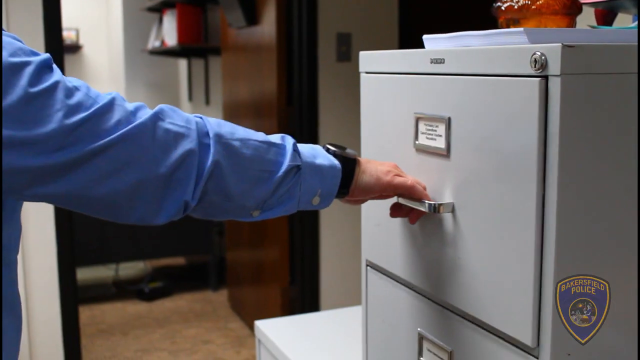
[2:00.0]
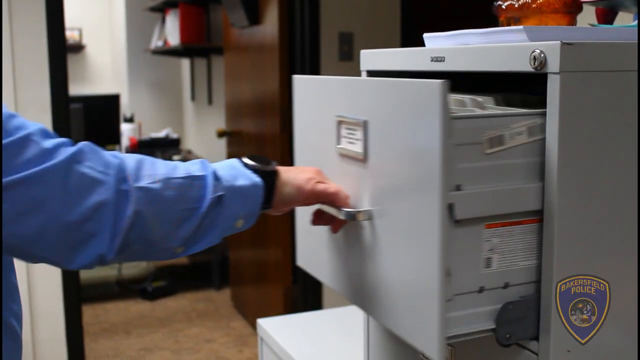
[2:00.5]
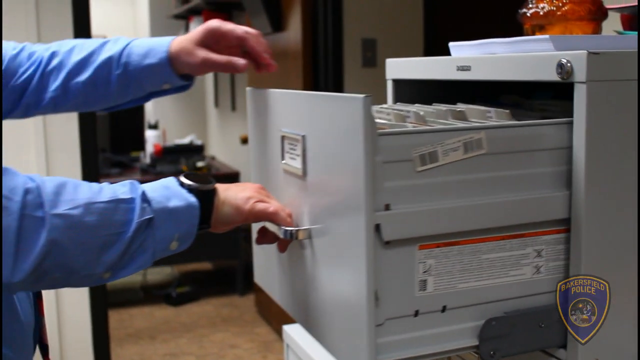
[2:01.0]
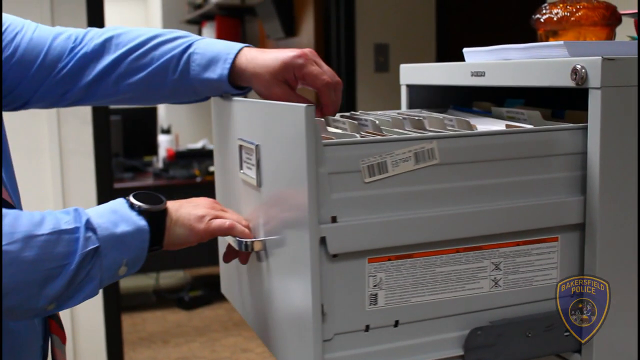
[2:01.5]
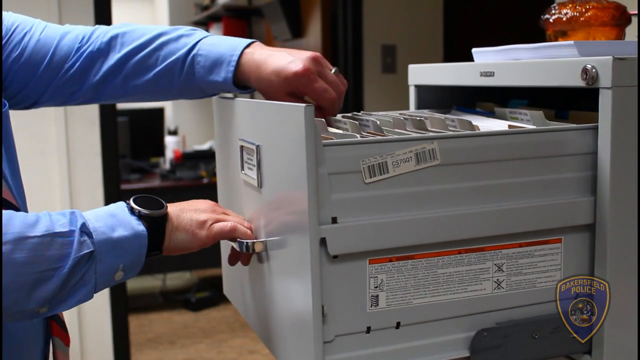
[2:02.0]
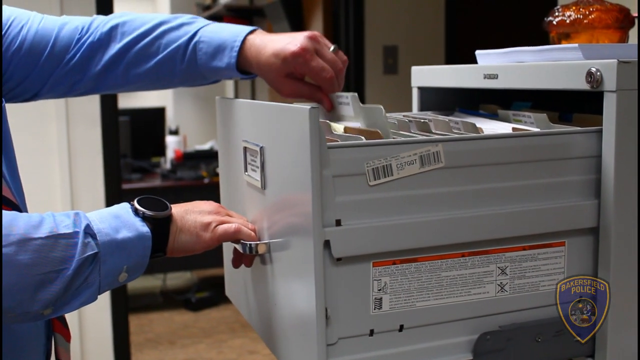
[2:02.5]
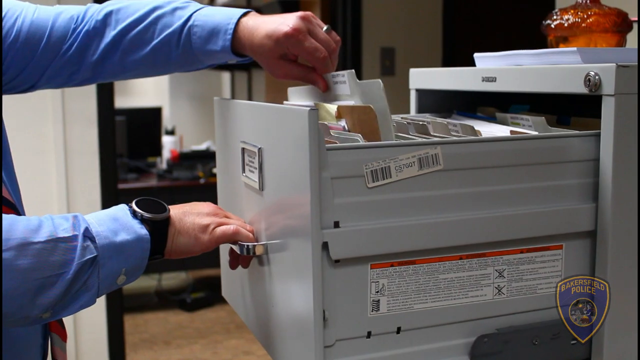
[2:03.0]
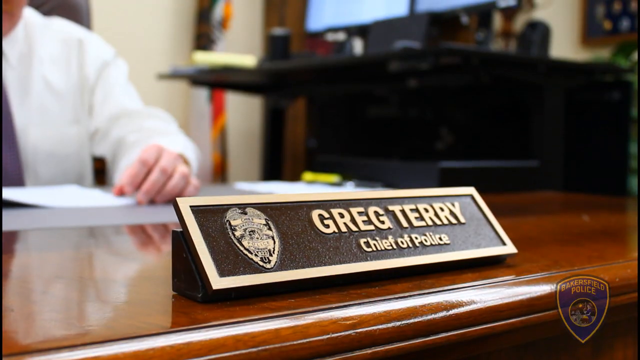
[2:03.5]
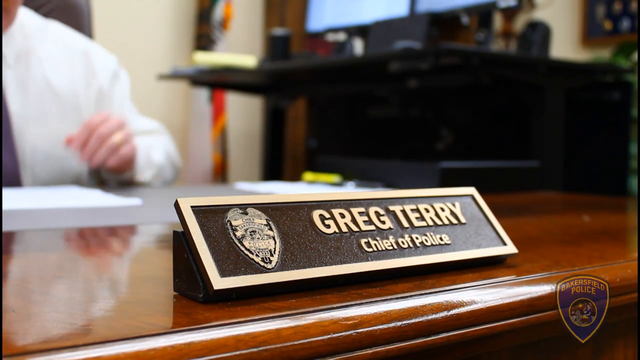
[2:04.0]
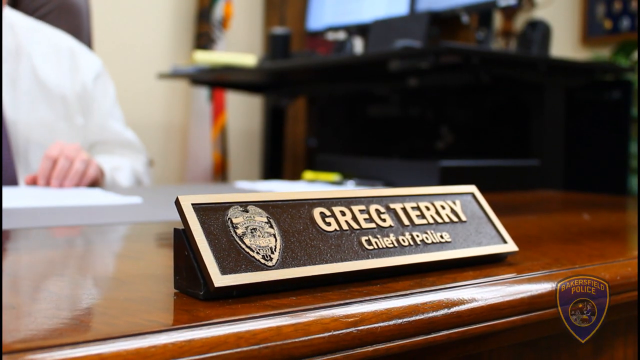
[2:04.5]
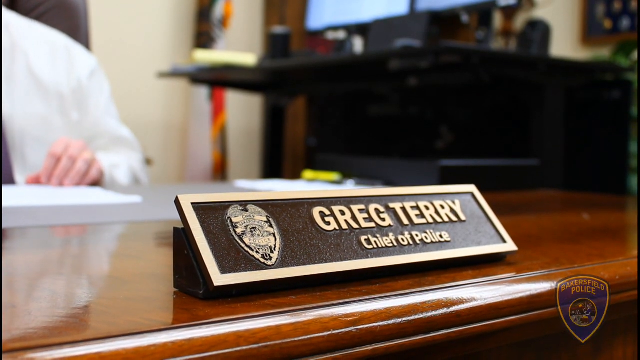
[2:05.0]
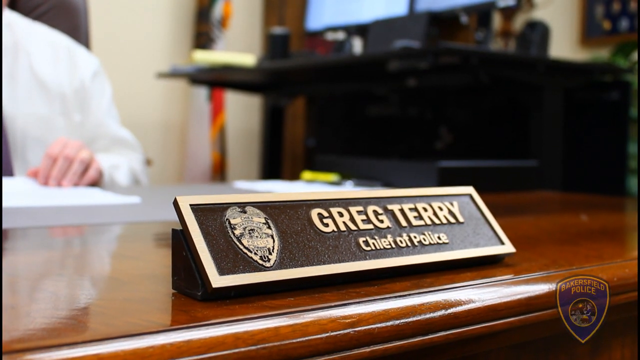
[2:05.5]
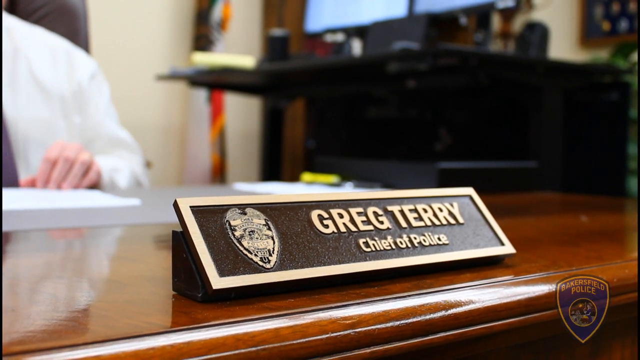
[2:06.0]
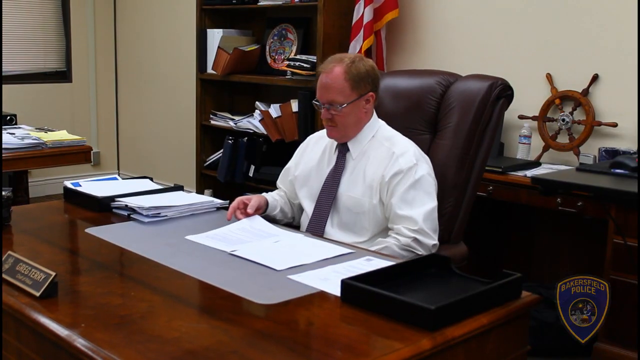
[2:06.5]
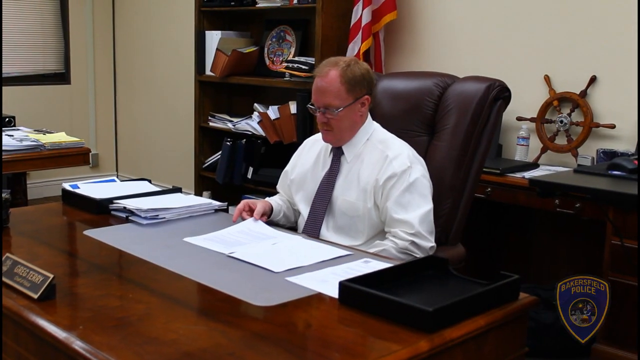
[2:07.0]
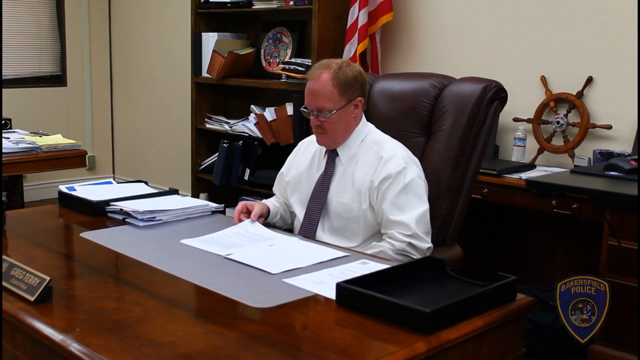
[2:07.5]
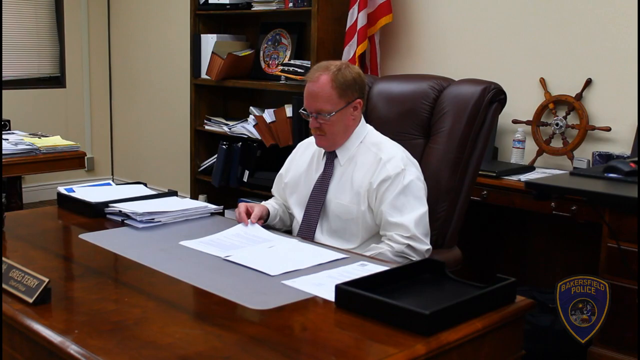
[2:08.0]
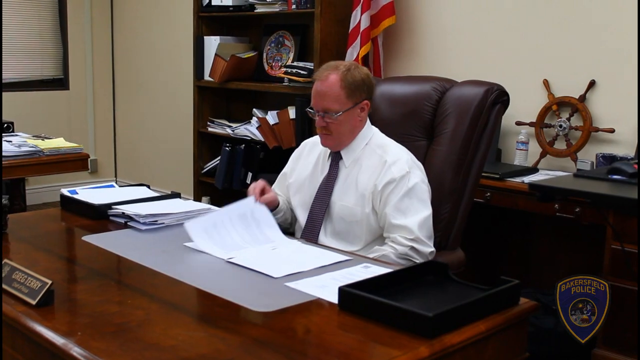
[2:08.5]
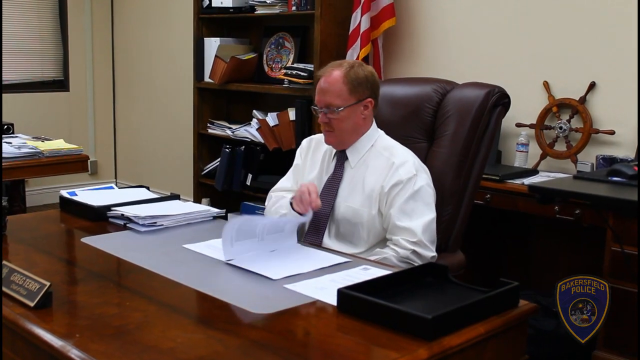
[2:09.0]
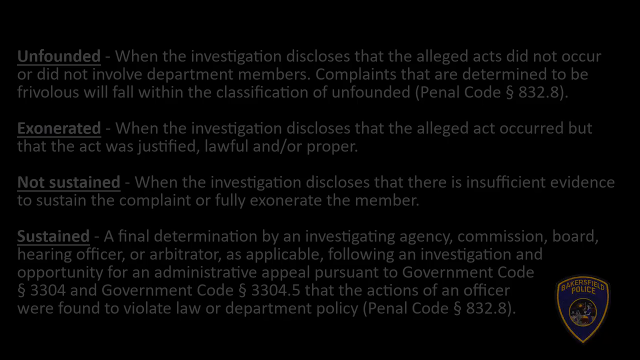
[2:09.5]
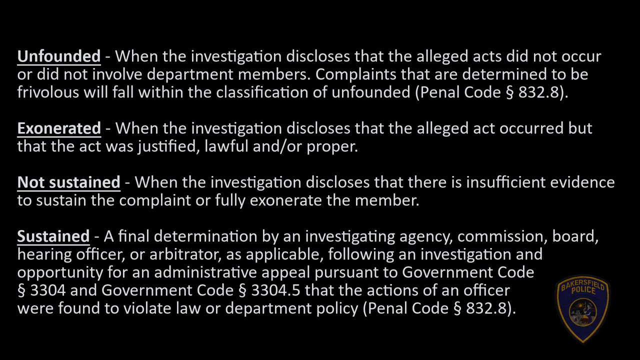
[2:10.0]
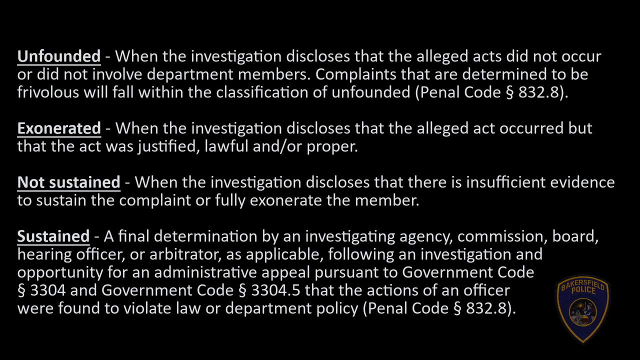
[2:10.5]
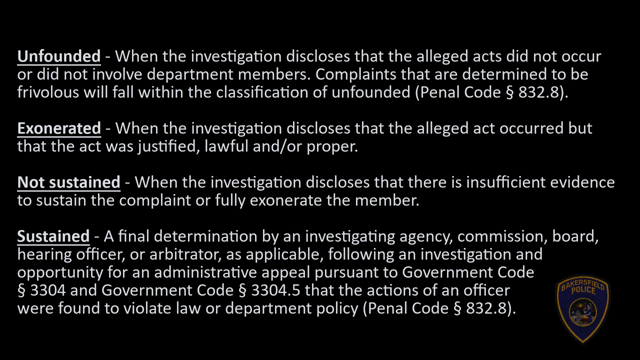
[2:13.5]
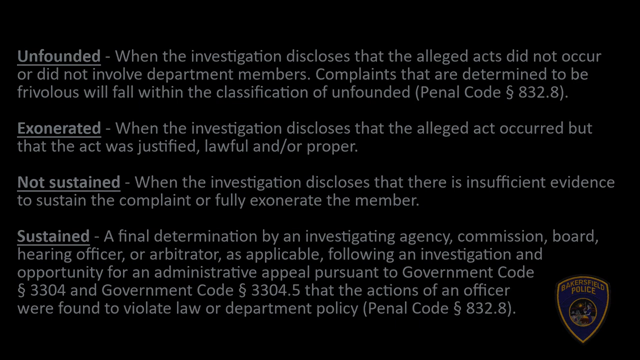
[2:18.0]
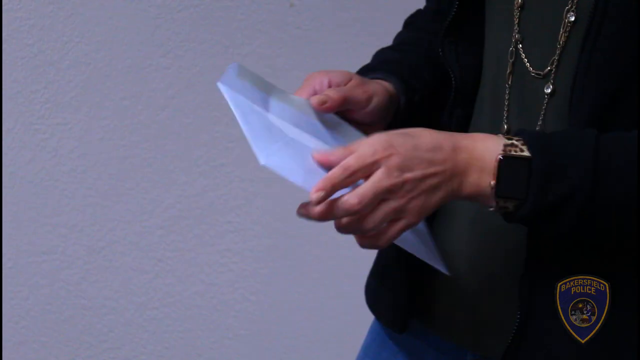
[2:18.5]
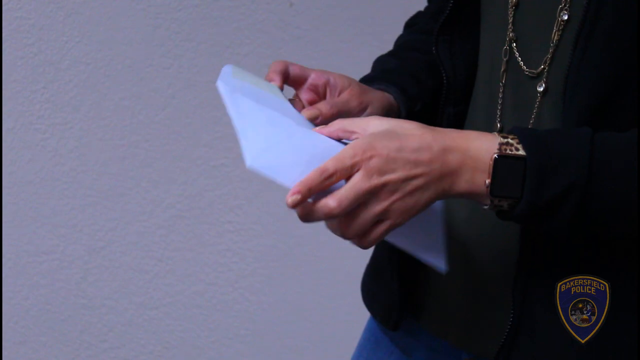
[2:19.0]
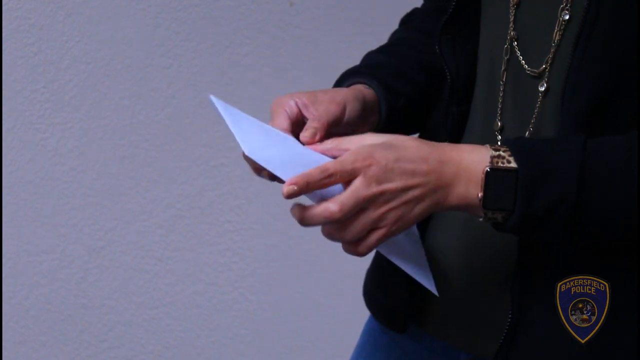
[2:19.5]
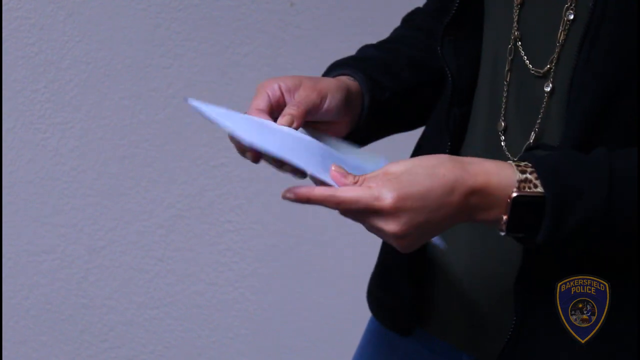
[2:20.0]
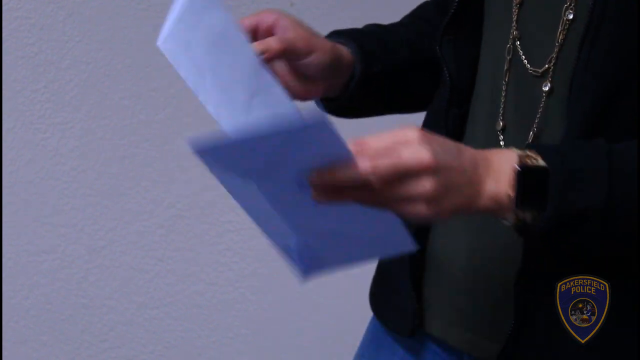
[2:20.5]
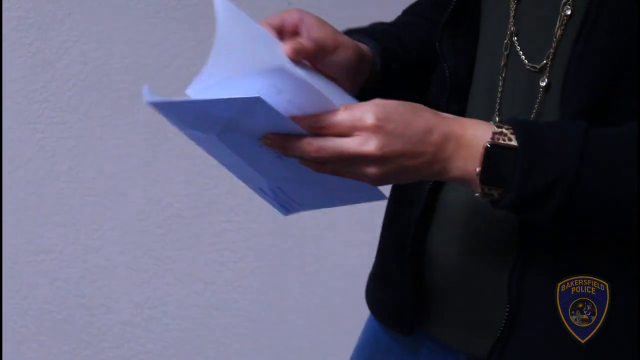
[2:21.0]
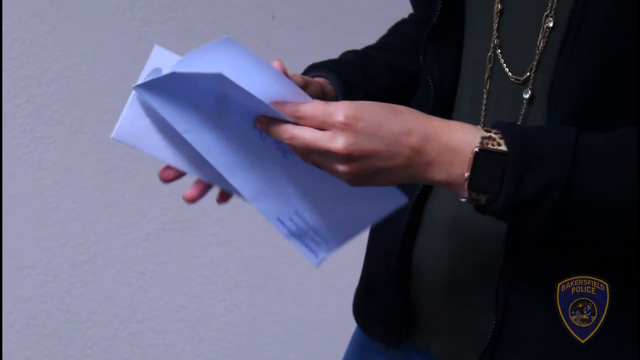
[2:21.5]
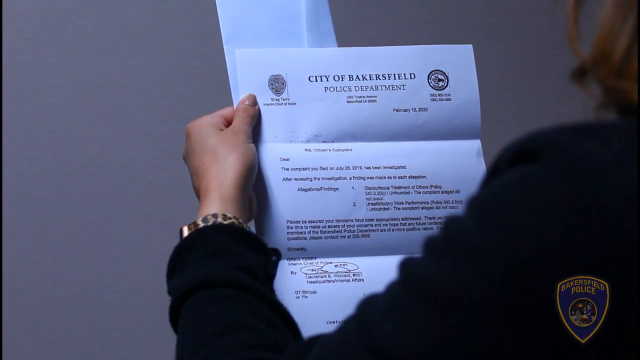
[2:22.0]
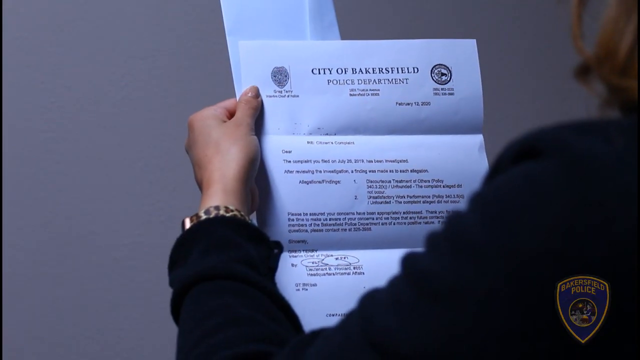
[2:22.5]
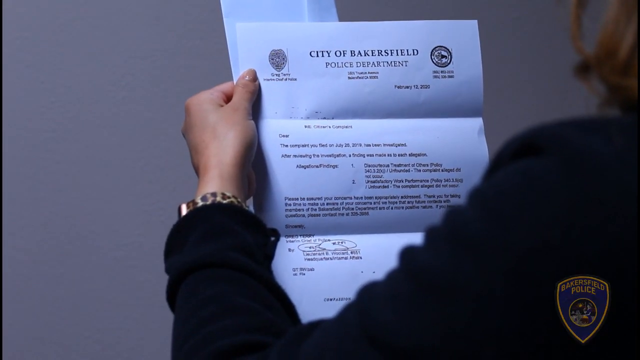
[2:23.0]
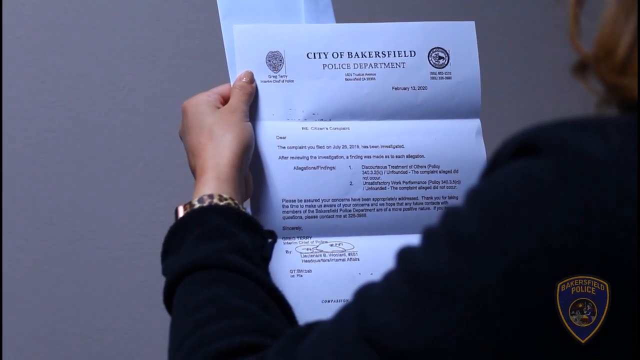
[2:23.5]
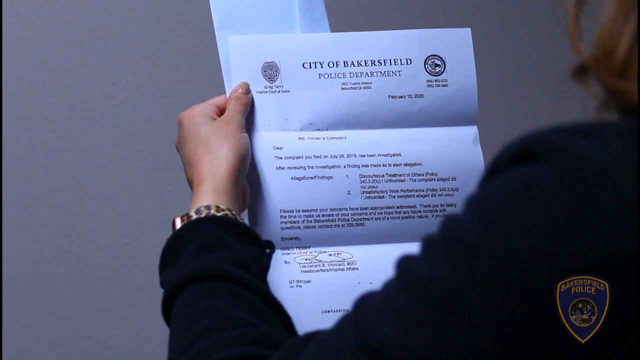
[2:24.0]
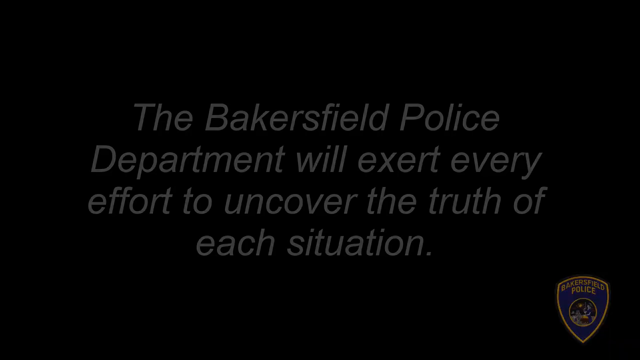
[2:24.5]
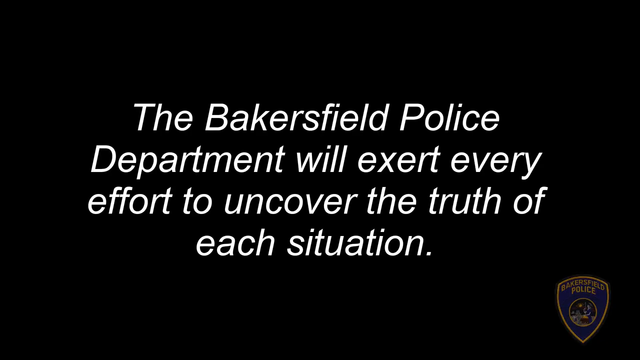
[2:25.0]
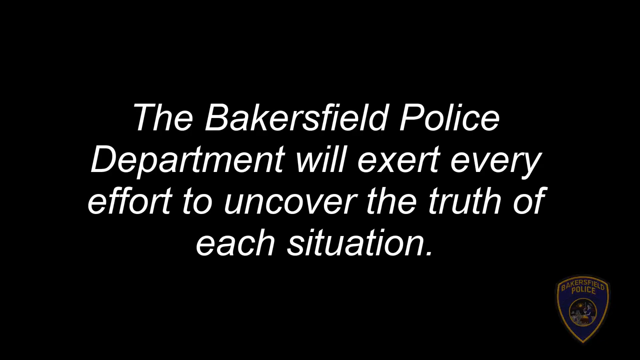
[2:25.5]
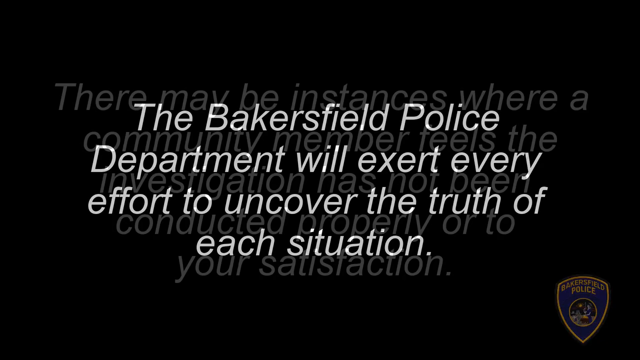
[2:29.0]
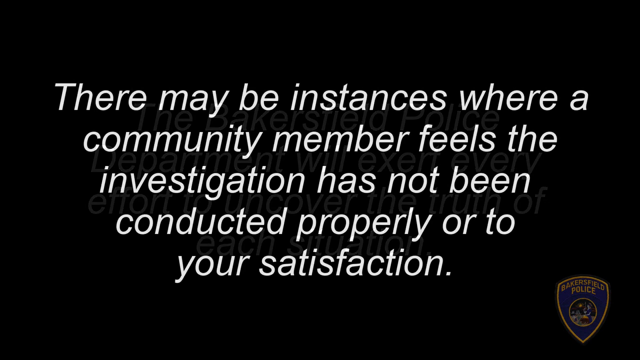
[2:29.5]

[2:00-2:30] Someone opens the top drawer of a light gray file cabinet pretty far, holding a gray, kind of tabbed file top in their left hand, and pulls something out of the top of it. Another scene shows a man sitting behind a desk, wearing a white shirt and tie. A name tag in sharp focus in the front reads "Greg Terry" with "Chief of Police" below it, and a copy of the police badge on its left part. Another shot of Mr. Terry shows reddish-brown hair thinning at the top and eyeglasses. He sits in a soft, high-backed brown chair at a wide desk that is very shiny on top, looking at some sort of papers and turning the pages of some sort of report. Information is then shown going into detail about unfounded, exonerated, not sustained or sustained, with definitions and more information about those terms.